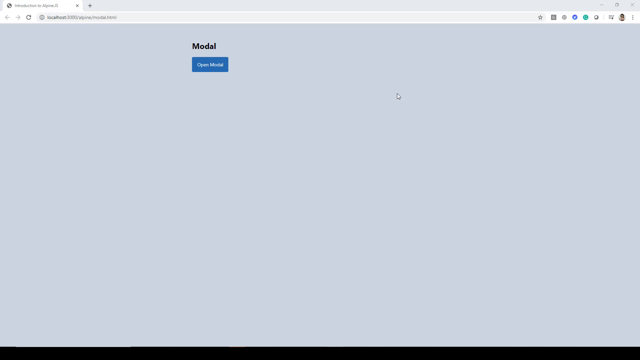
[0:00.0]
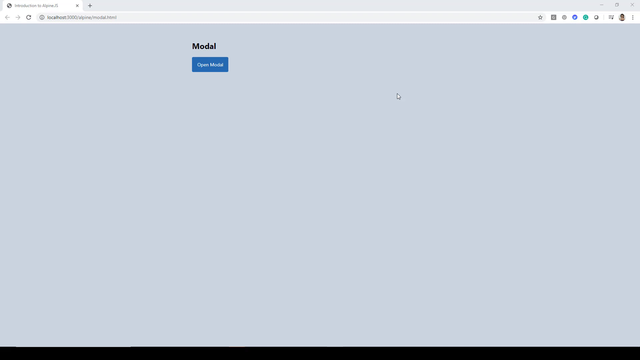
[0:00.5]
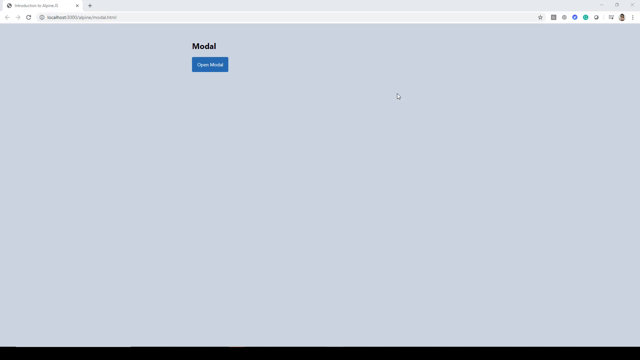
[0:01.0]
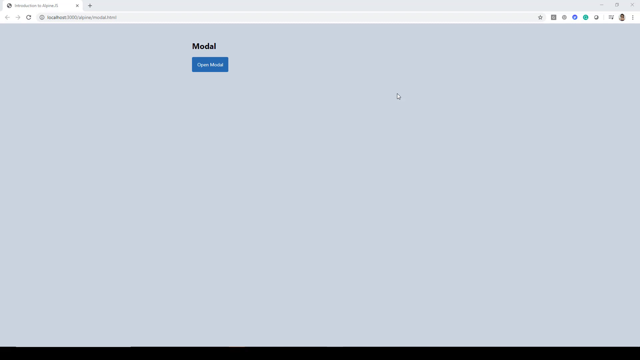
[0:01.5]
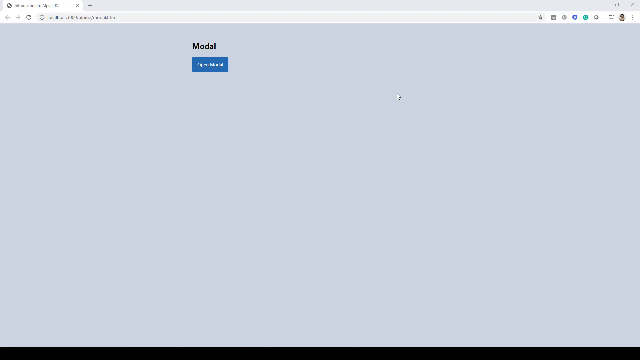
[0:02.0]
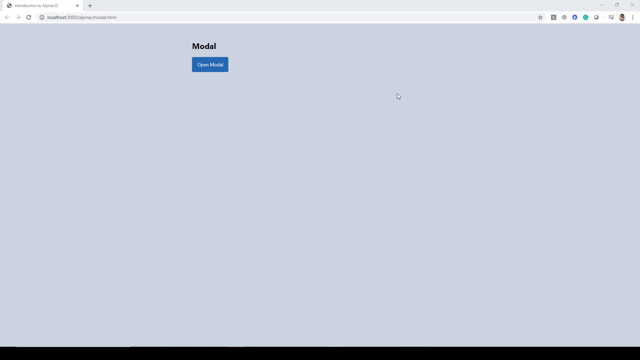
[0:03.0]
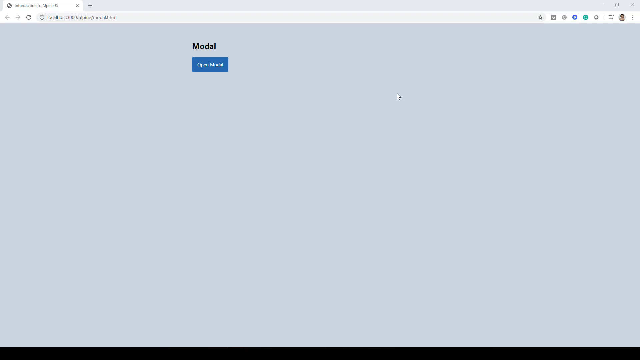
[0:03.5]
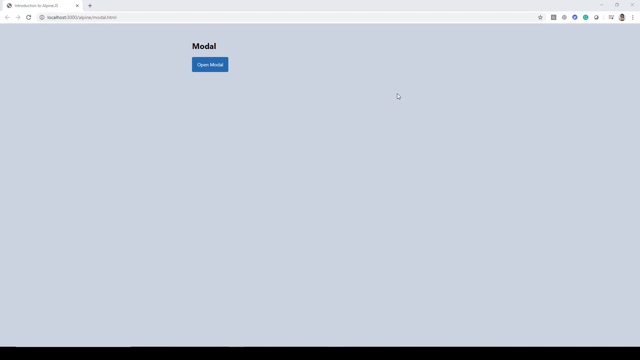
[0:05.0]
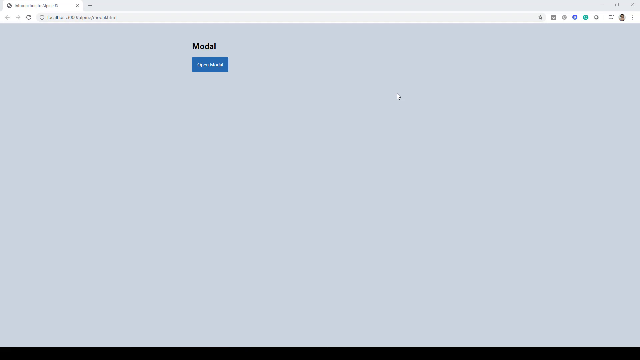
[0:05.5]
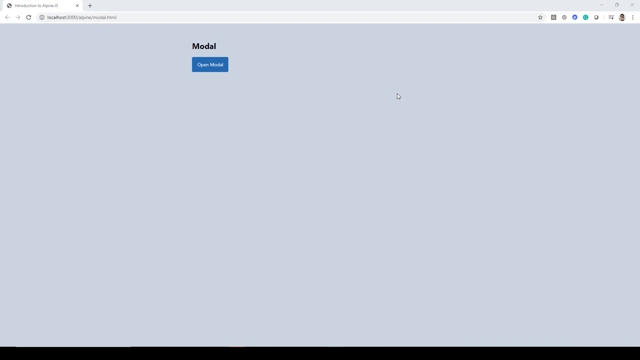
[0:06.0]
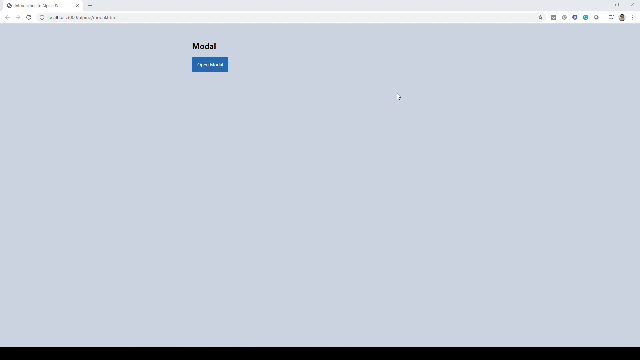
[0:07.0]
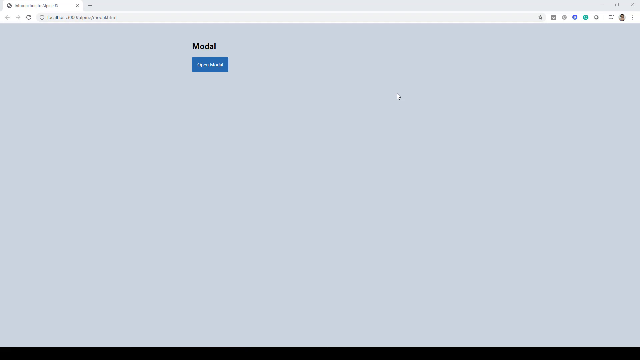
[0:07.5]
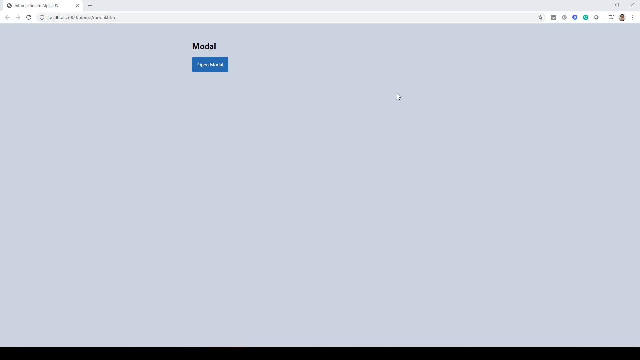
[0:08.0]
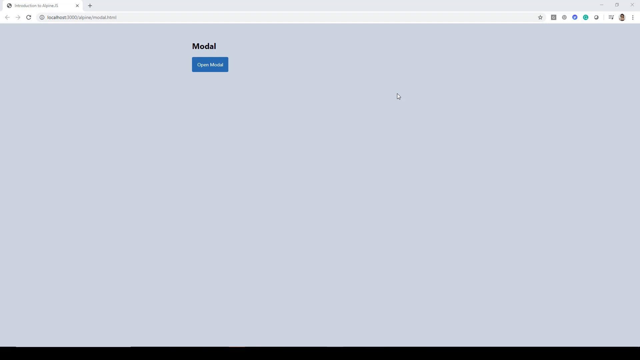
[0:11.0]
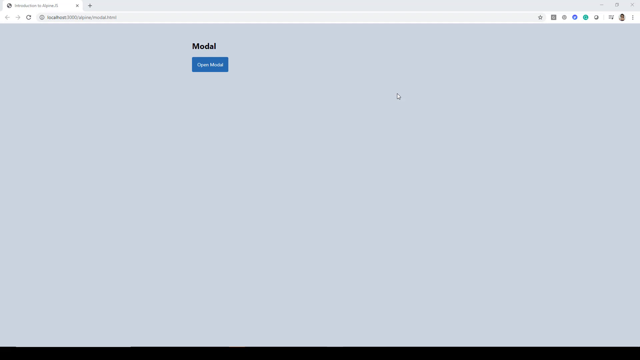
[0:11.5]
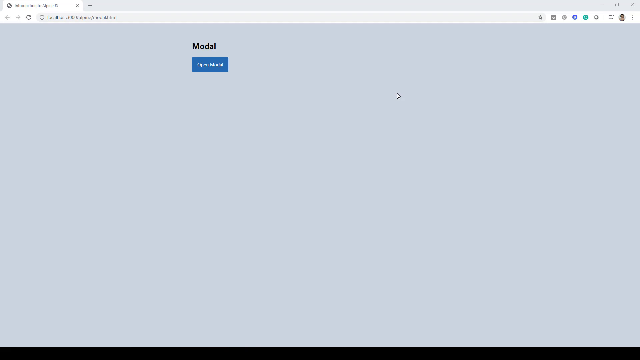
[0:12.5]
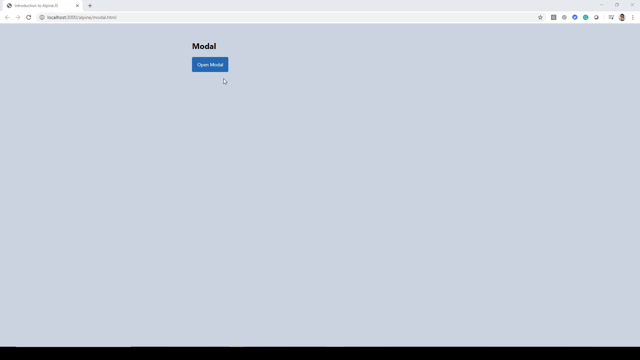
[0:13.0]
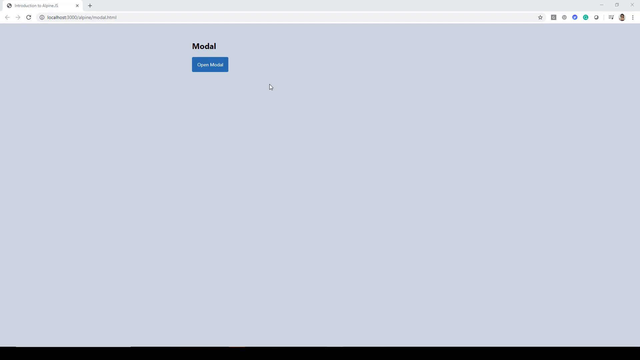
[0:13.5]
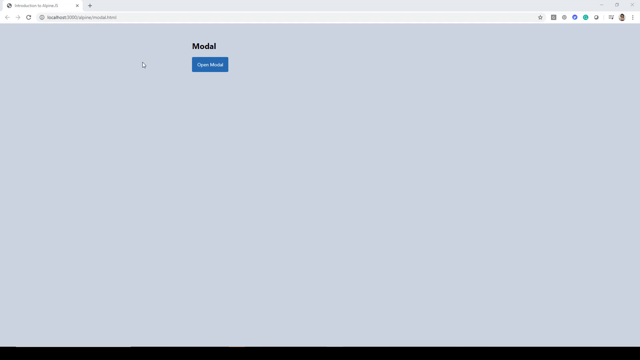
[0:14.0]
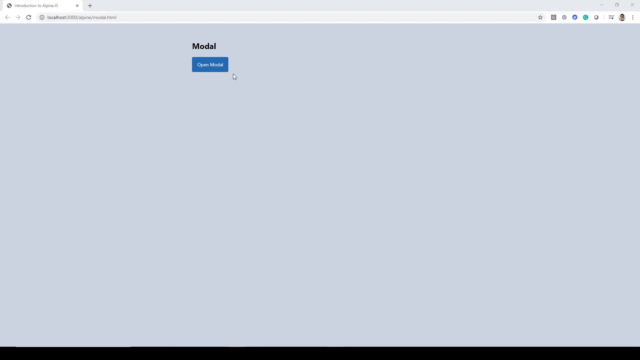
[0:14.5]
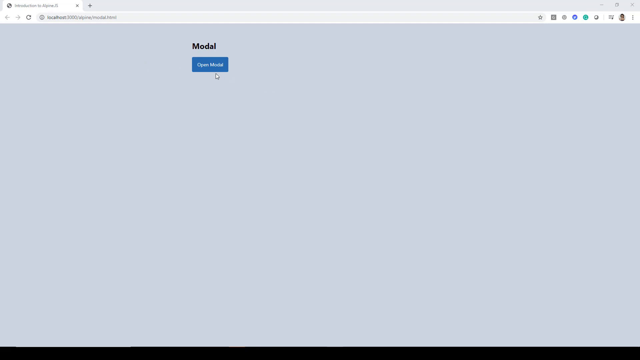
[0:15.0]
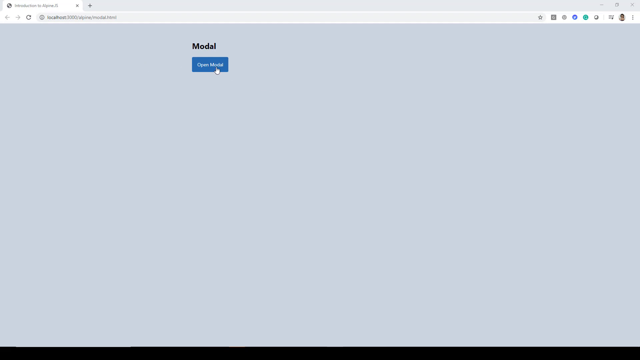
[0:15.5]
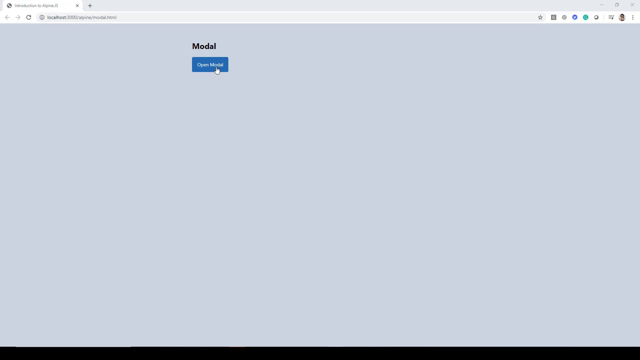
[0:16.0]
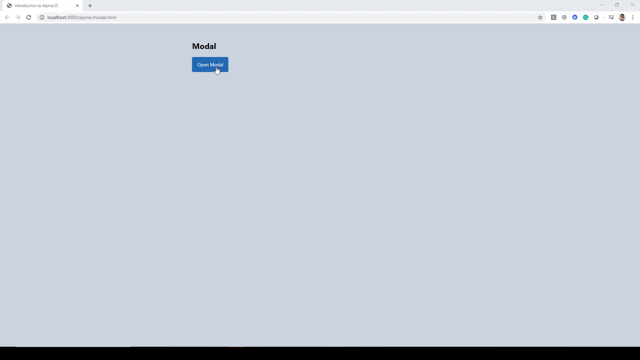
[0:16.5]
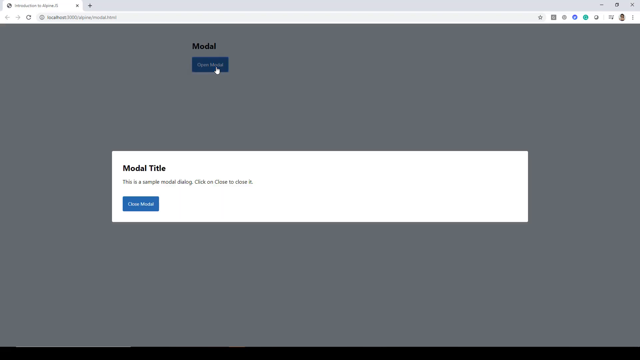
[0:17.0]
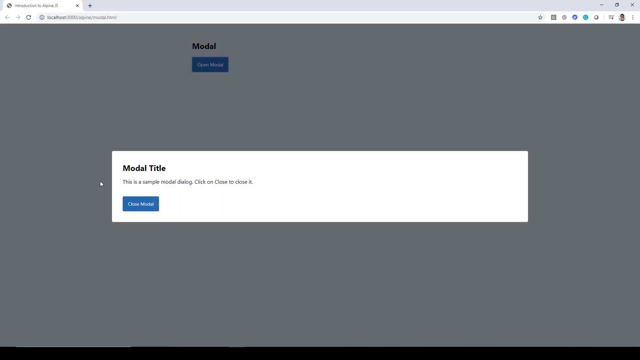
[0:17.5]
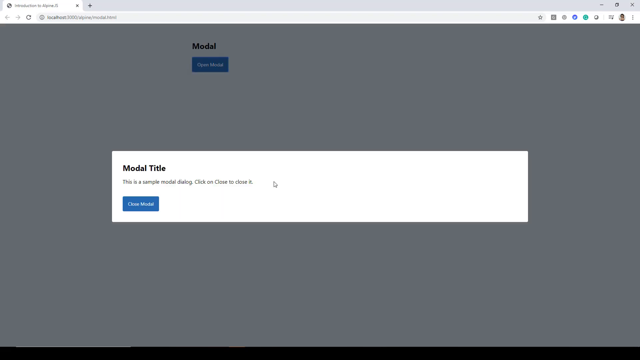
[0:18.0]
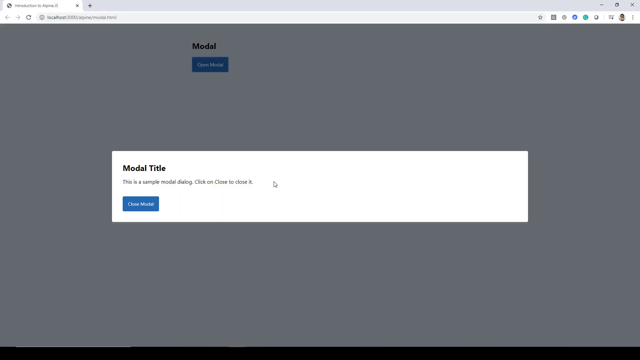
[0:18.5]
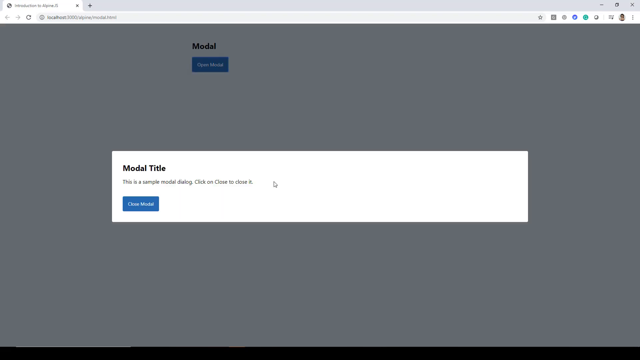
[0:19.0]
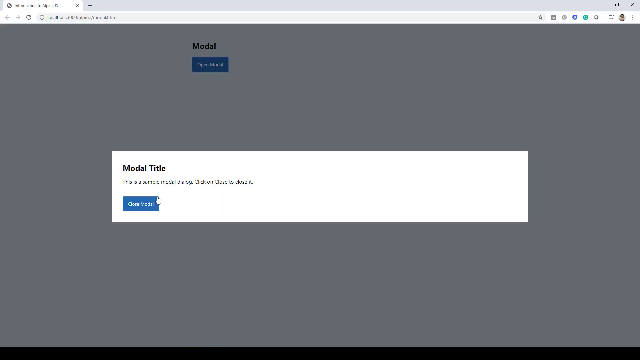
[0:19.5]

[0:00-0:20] The user is in Google Chrome on a site at localhost 3000, which seems to be private rather than a public website. The page is very basic: it says "modal" and has a button that says "open modal." A few browser extensions are visible. There are no notable colors and no other icons. Clicking the open modal button displays a dialog box containing one extra button, which the user seems to click near the end.